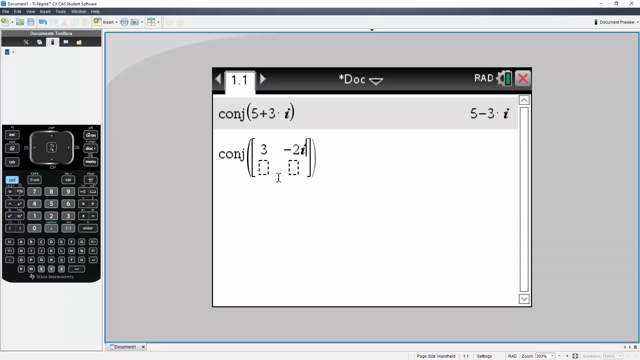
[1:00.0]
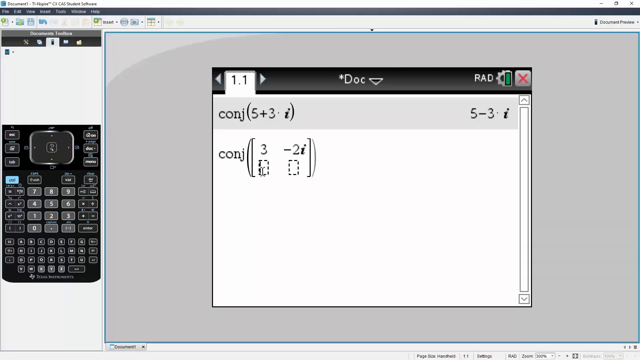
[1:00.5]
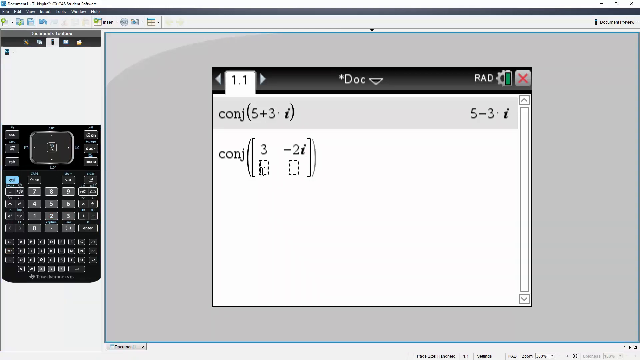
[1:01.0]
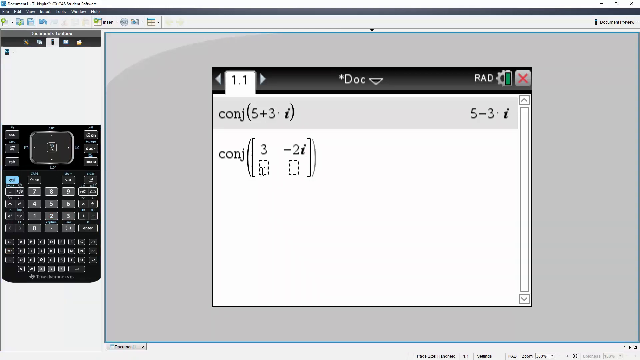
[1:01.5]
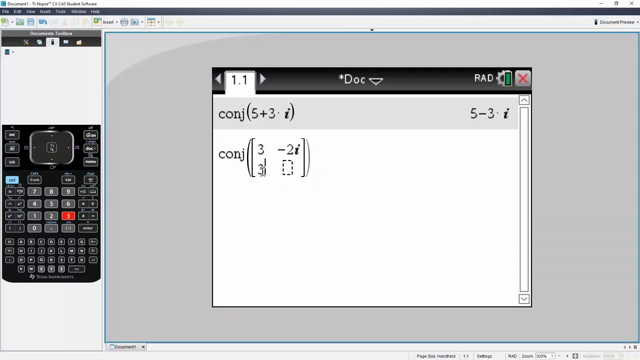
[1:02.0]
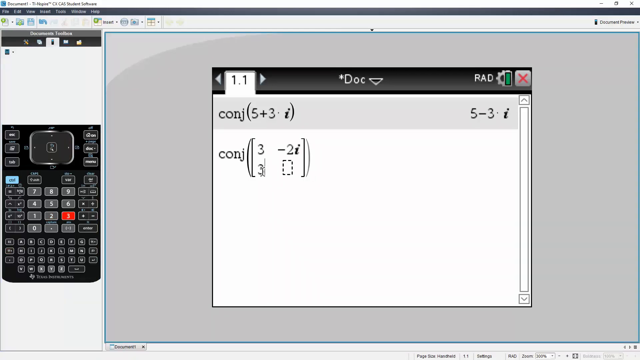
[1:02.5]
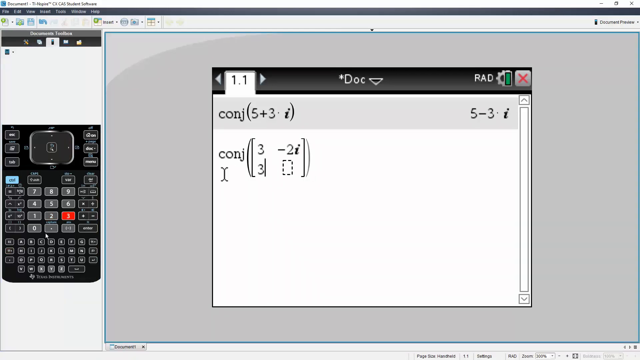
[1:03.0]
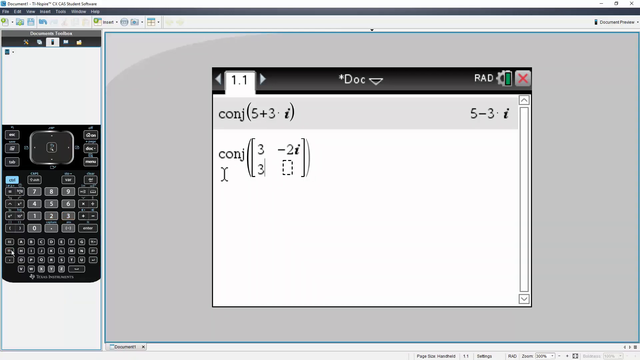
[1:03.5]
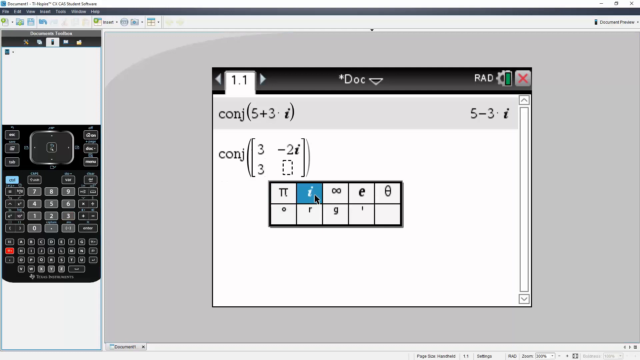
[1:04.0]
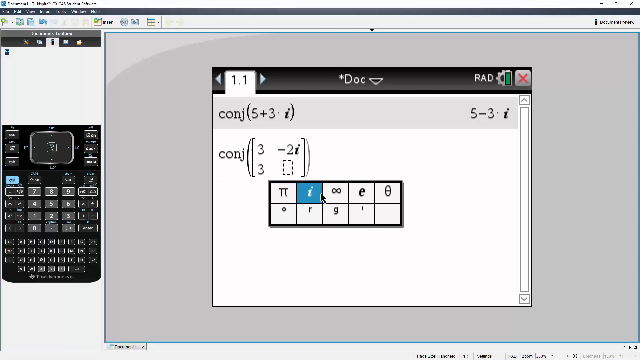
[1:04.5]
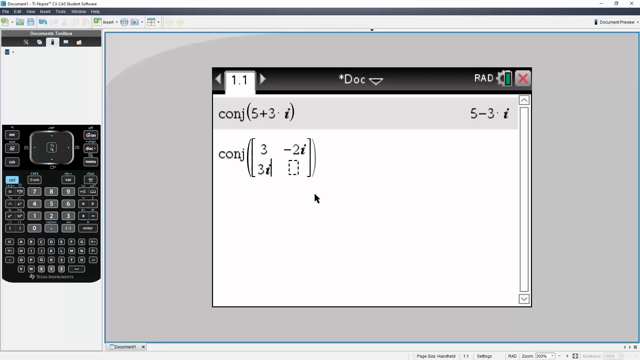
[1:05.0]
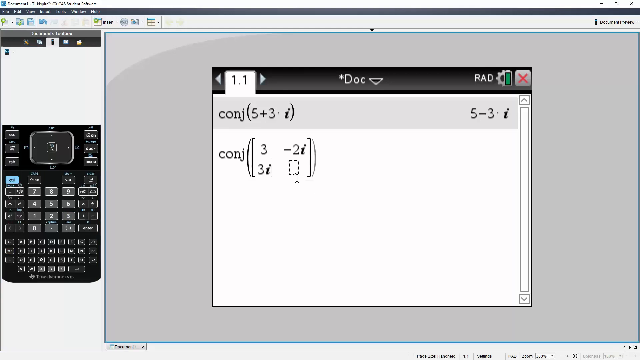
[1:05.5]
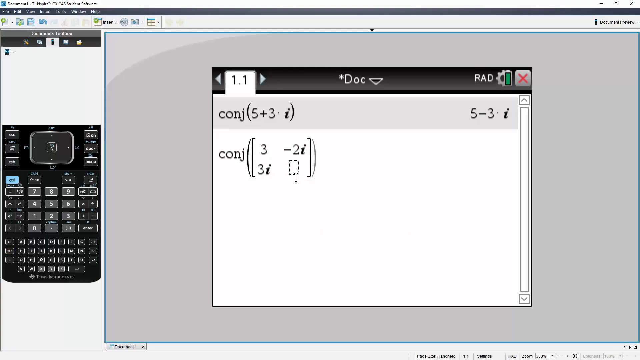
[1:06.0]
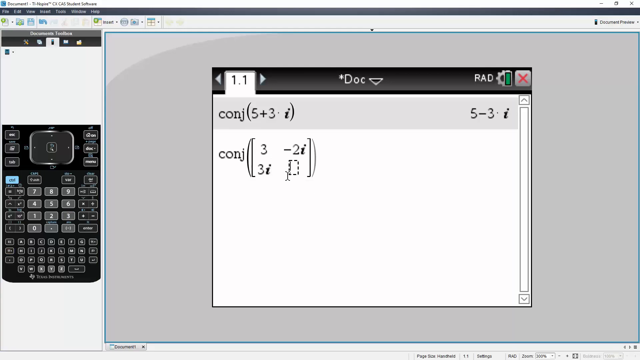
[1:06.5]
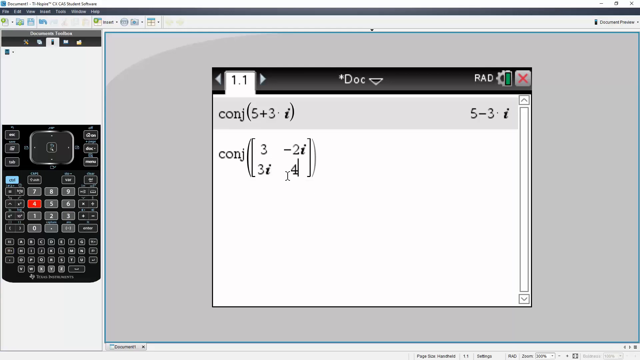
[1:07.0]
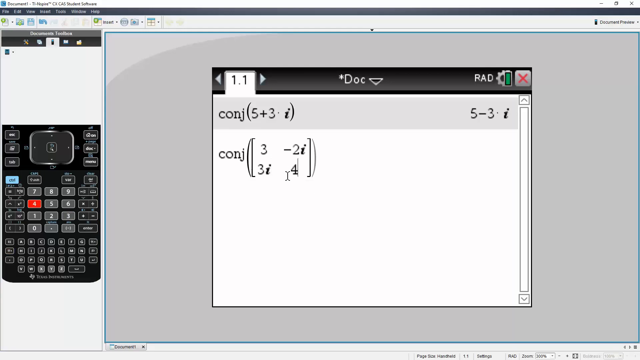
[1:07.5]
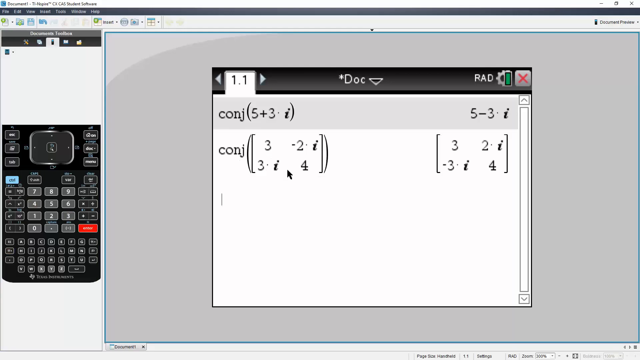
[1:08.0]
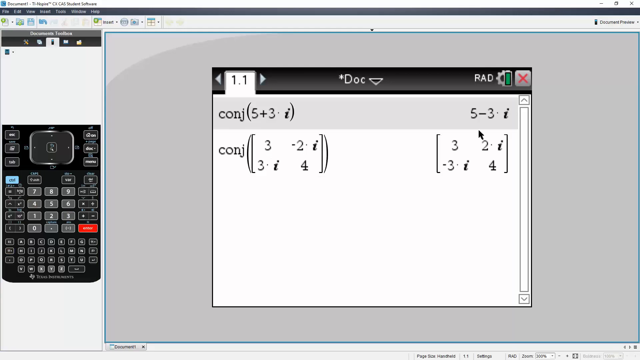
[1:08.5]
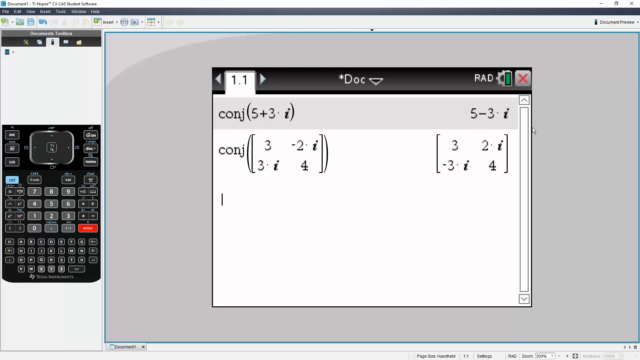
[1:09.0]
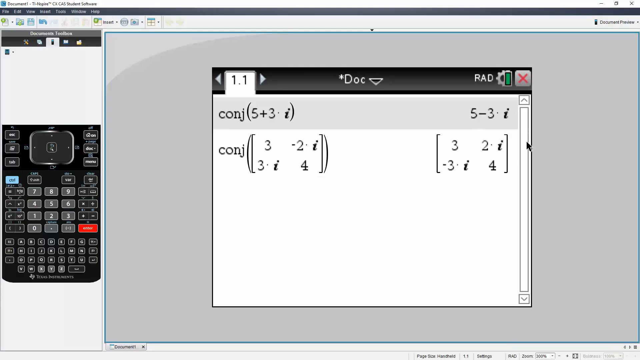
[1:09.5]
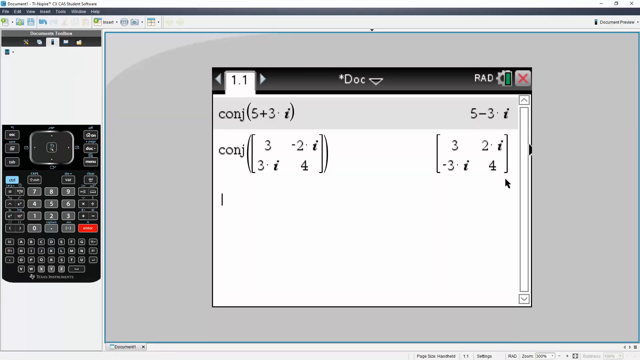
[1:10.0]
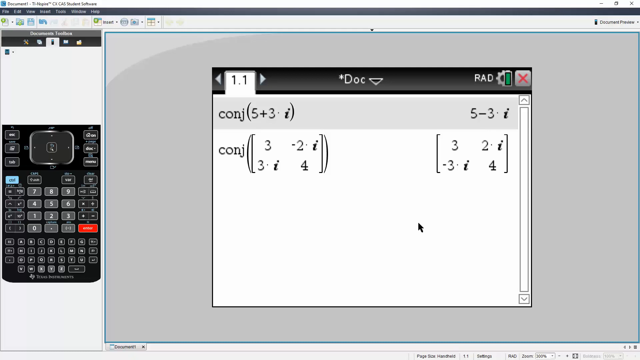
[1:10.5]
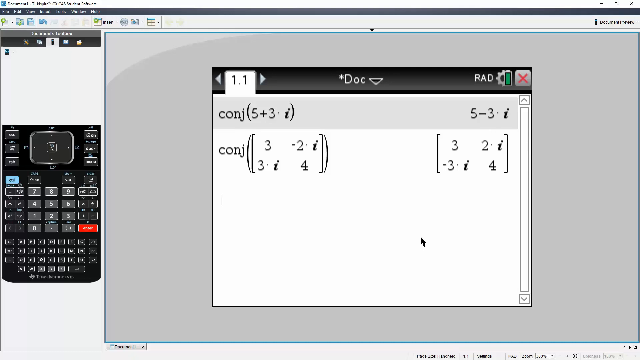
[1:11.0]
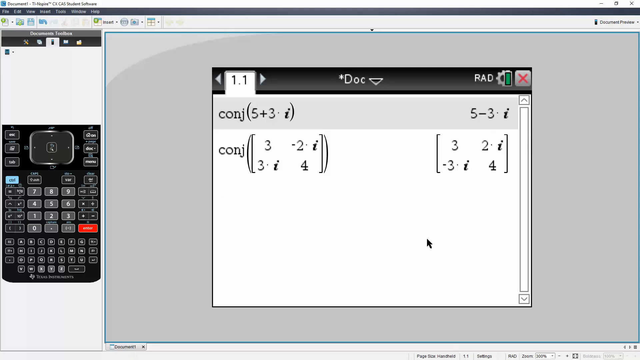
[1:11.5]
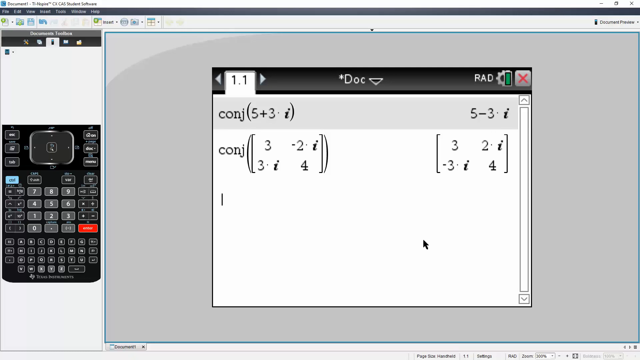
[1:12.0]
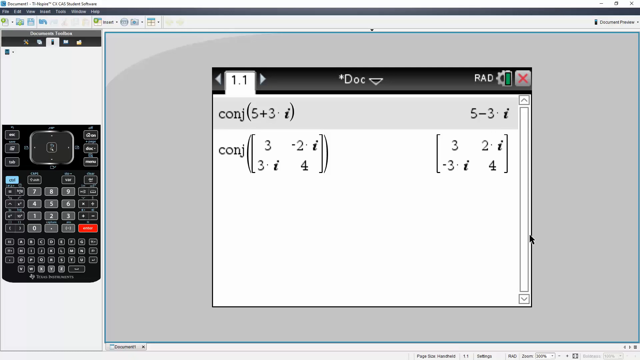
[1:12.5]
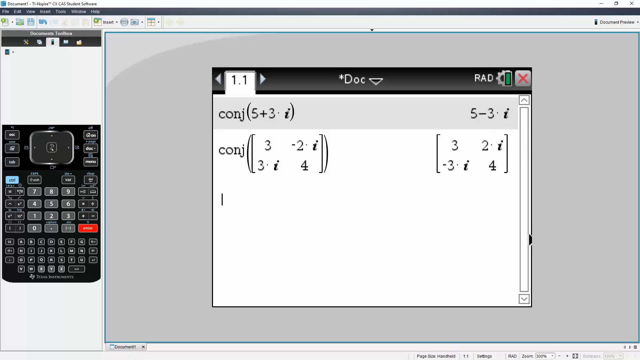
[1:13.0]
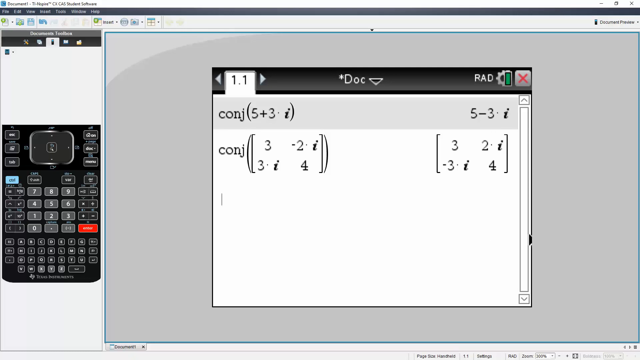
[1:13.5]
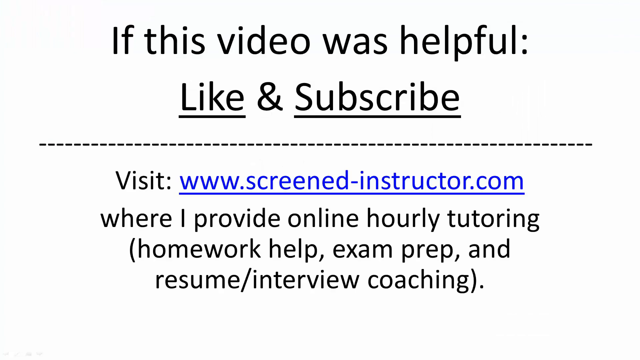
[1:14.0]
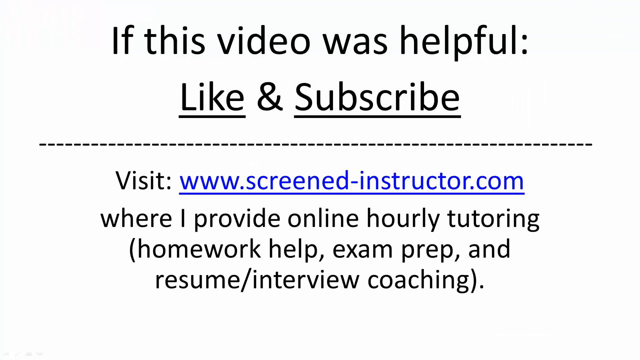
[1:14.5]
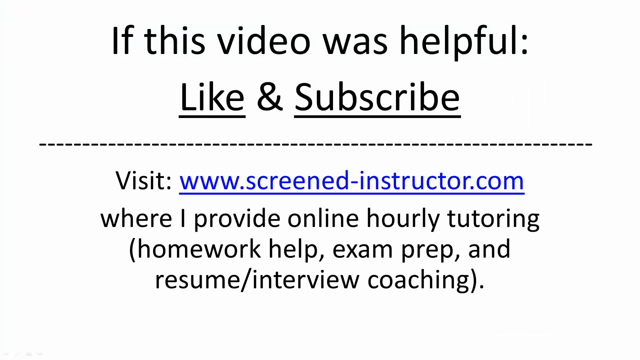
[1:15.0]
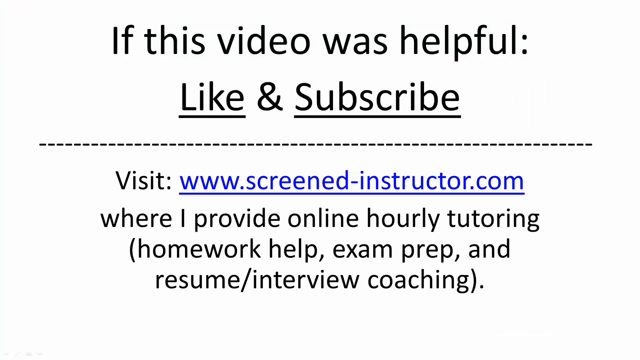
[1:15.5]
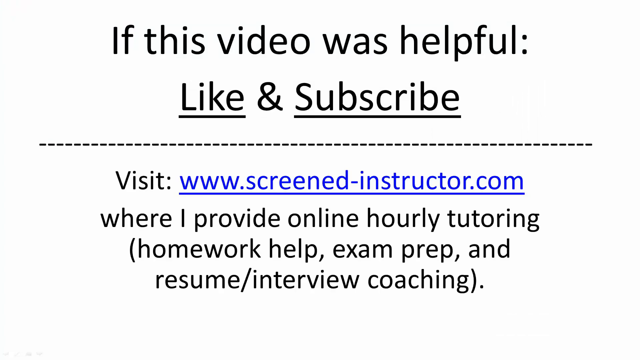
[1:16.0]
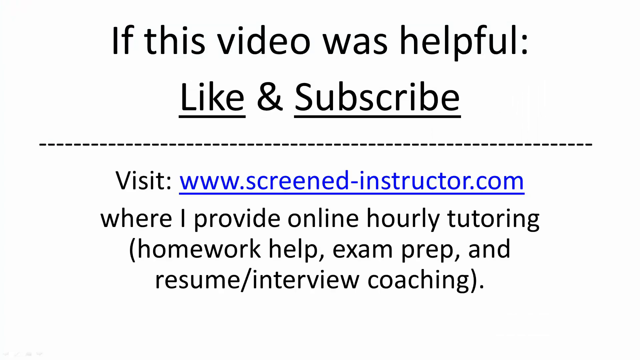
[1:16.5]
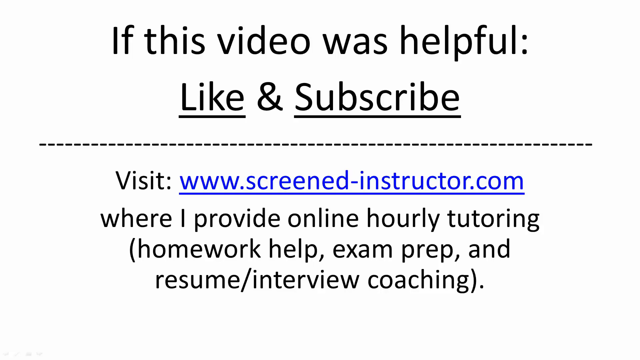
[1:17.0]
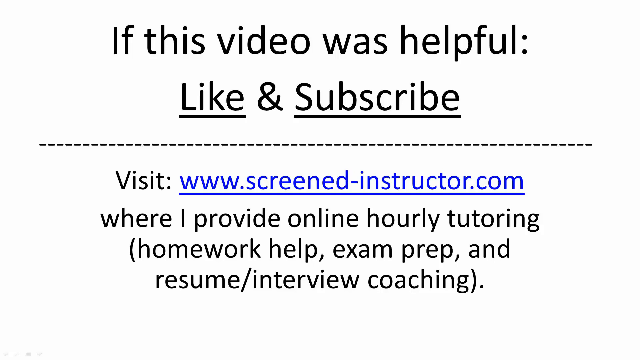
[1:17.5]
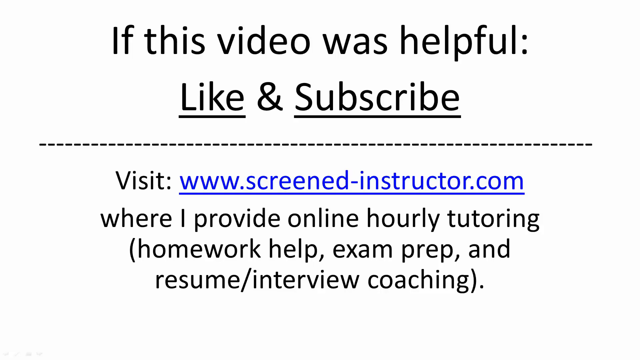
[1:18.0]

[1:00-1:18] A person works out a math problem in a document, with a calculator face on the left side of the screen. As buttons on the calculator face are selected with the mouse, they turn red. The mouse pointer then moves back to the document and clicks wherever the numbers and math equations are to go. At the end, text reads "if this video was helpful, like and subscribe," followed by "visit www.screenedinstructor.com where I provide online hourly tutorial, homework help, exam prep, and resume or interview coaching." The software program is open on a computer, but the text at its top is too small to read, so the program and the specialized calculator cannot be identified.